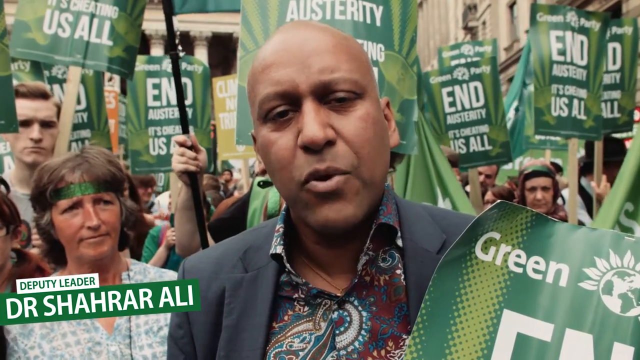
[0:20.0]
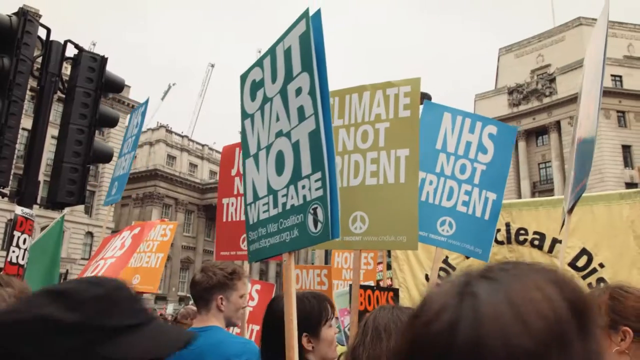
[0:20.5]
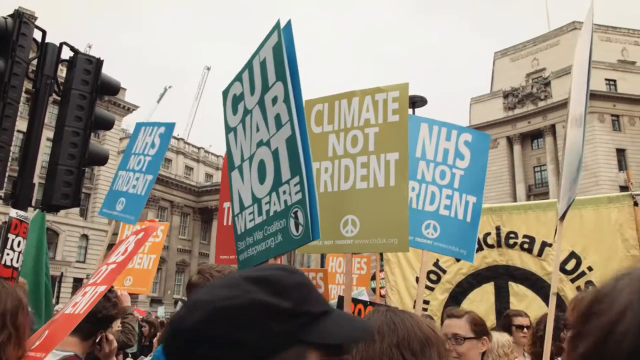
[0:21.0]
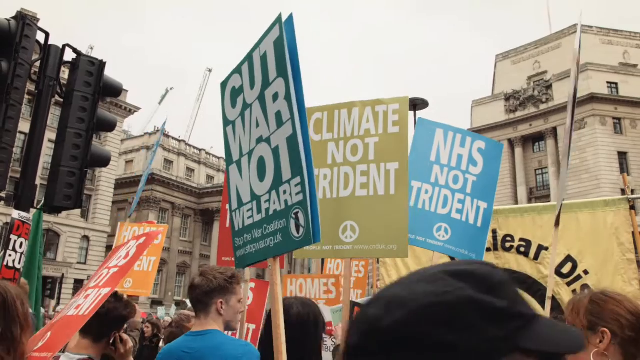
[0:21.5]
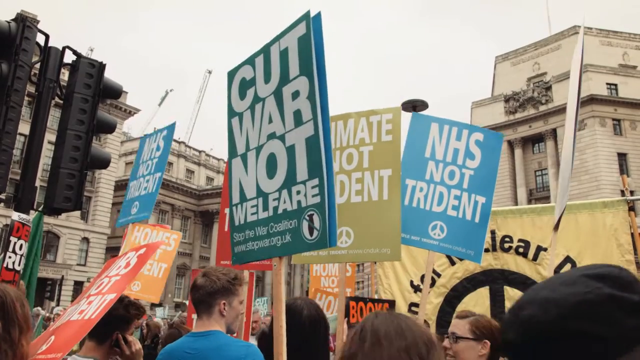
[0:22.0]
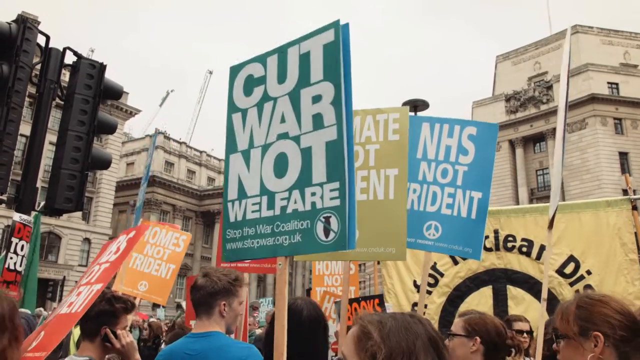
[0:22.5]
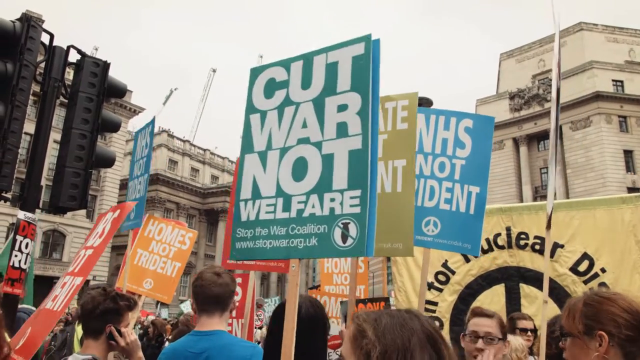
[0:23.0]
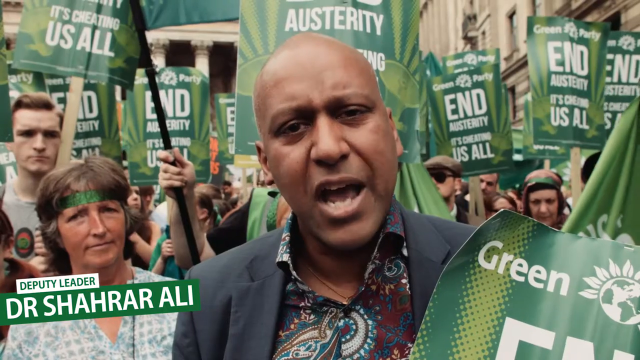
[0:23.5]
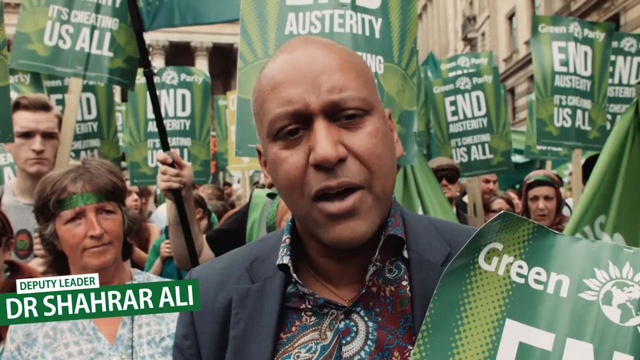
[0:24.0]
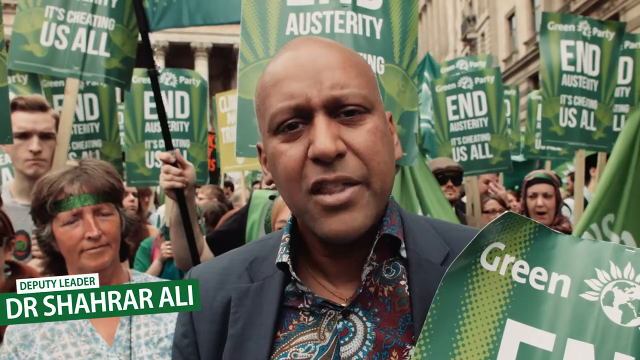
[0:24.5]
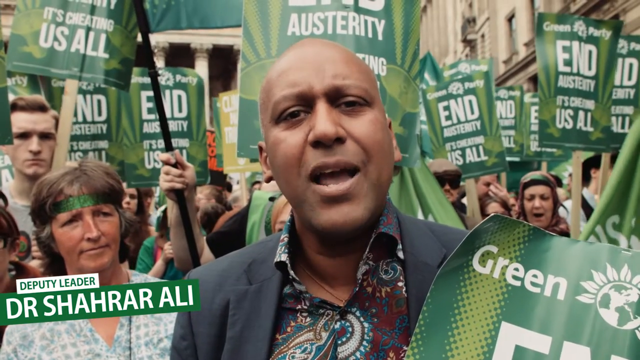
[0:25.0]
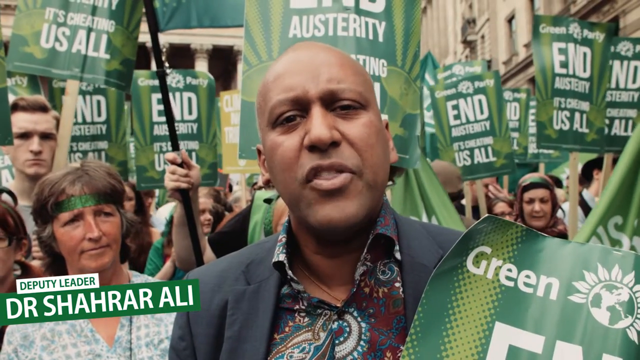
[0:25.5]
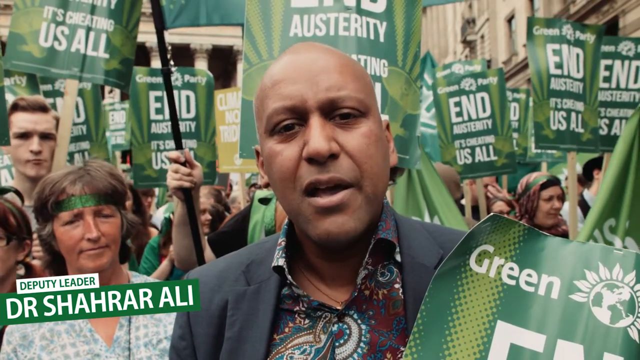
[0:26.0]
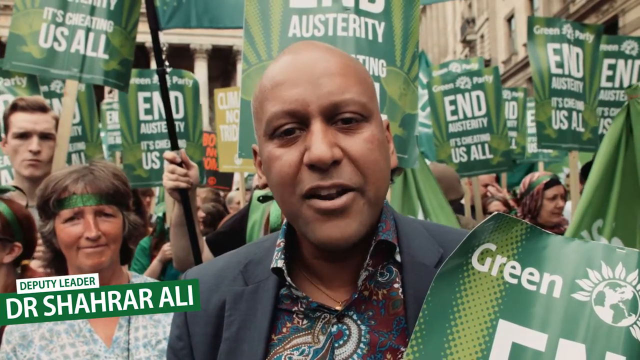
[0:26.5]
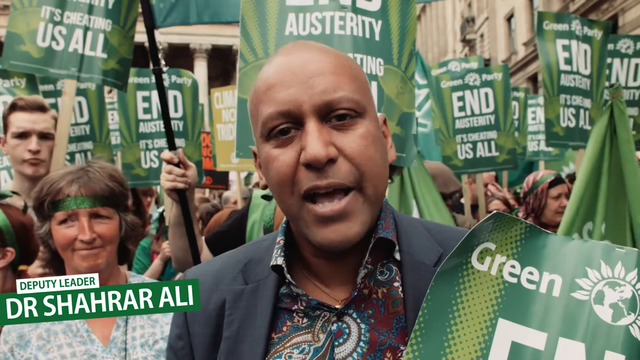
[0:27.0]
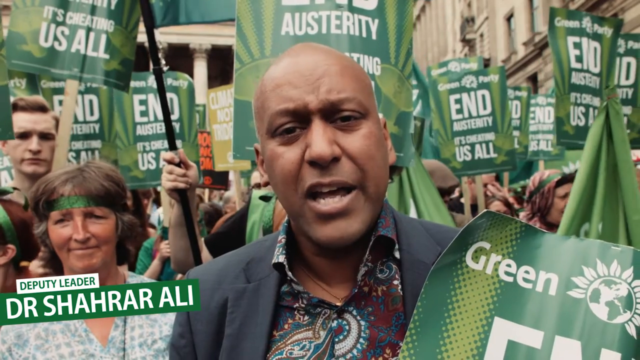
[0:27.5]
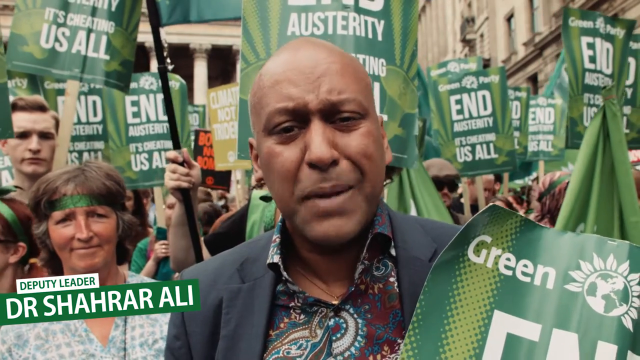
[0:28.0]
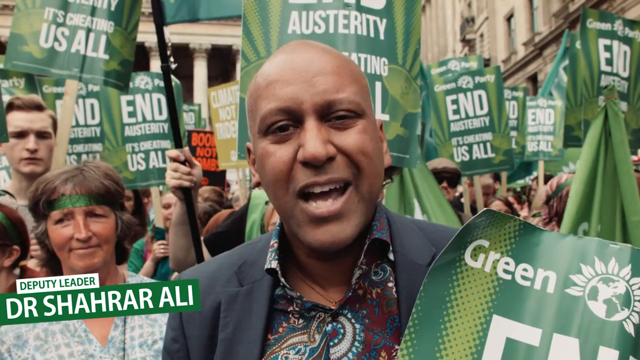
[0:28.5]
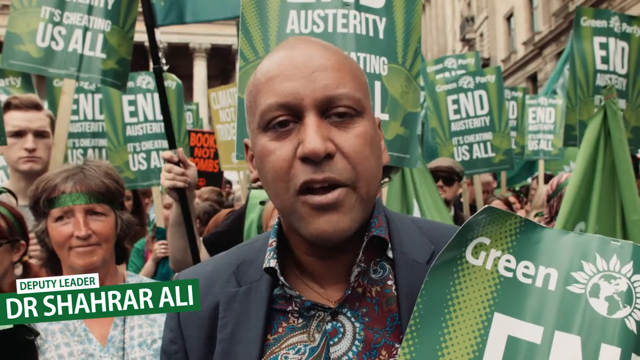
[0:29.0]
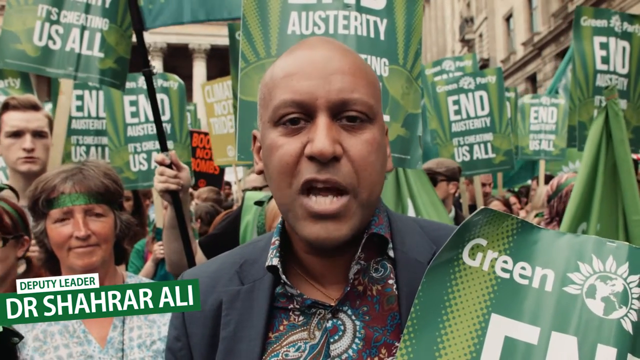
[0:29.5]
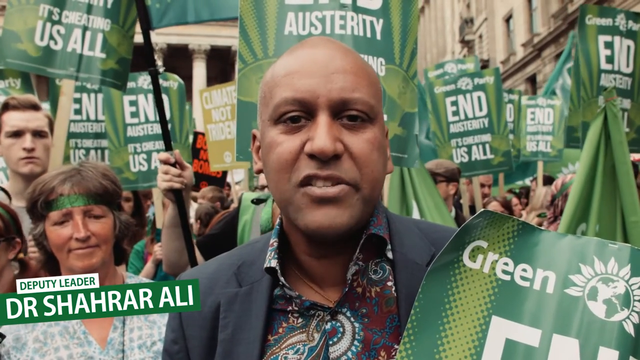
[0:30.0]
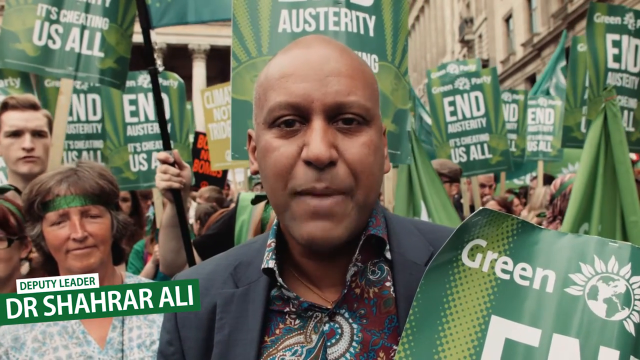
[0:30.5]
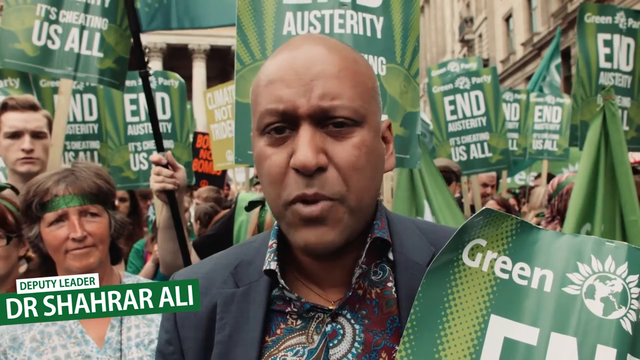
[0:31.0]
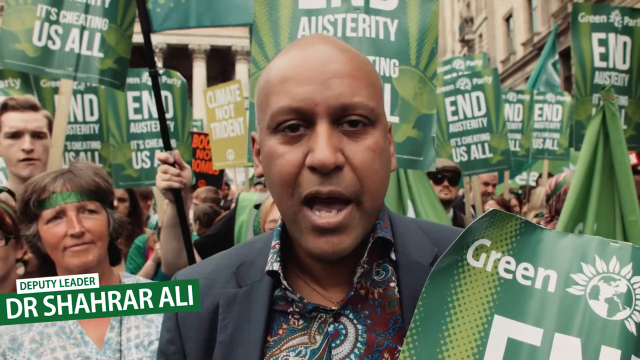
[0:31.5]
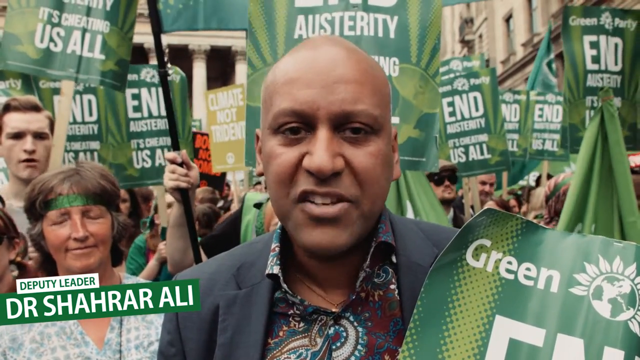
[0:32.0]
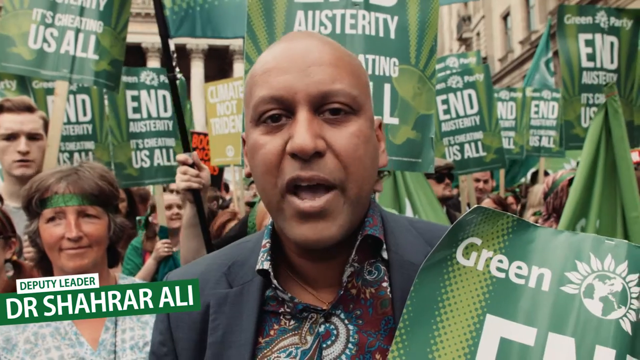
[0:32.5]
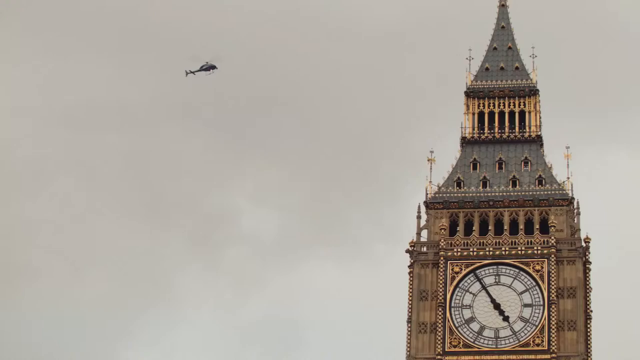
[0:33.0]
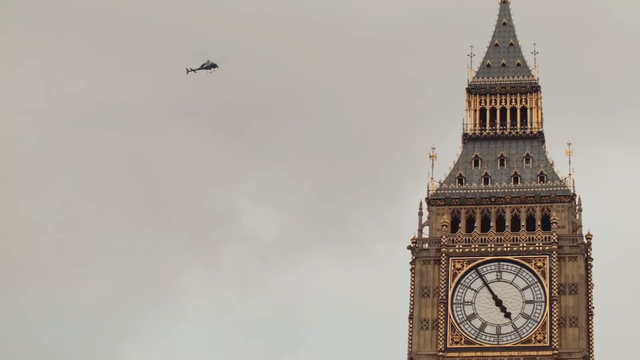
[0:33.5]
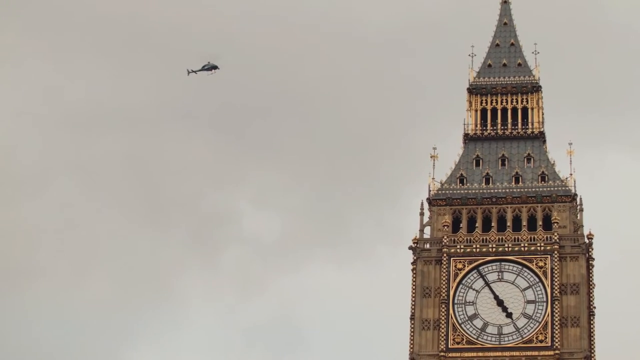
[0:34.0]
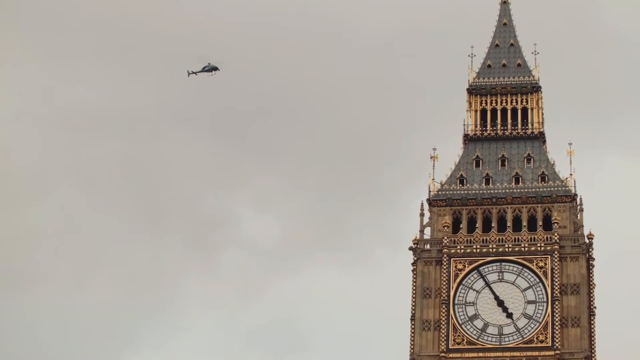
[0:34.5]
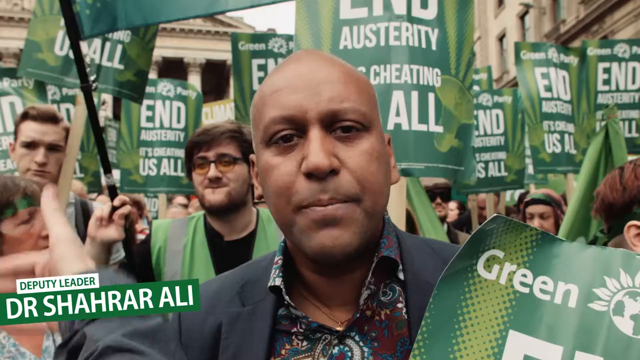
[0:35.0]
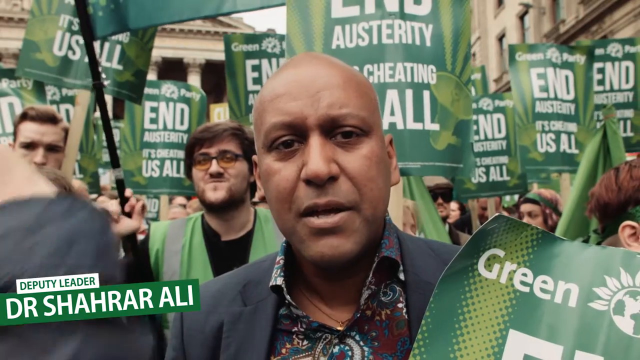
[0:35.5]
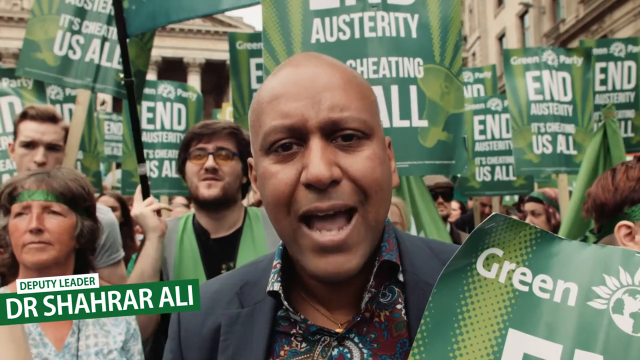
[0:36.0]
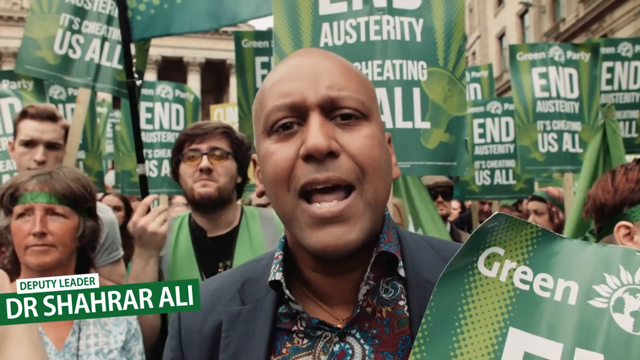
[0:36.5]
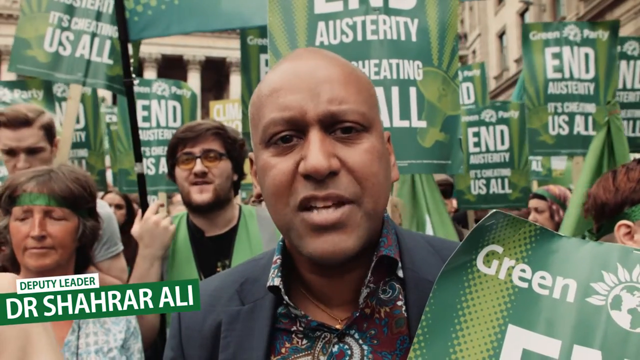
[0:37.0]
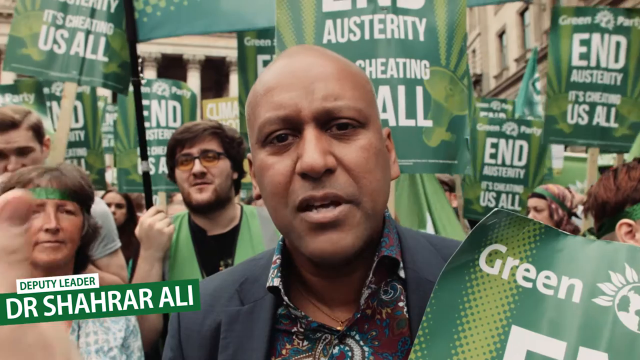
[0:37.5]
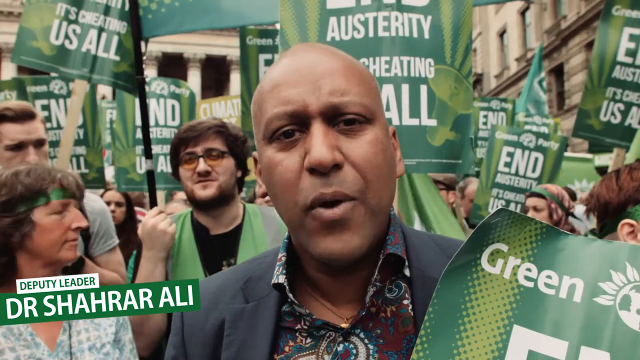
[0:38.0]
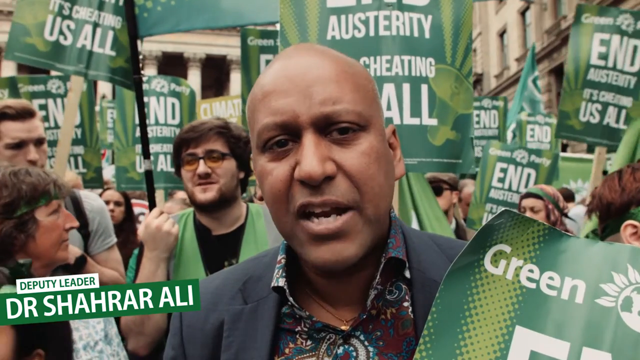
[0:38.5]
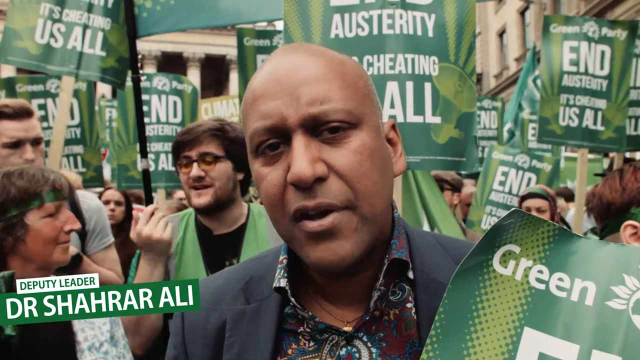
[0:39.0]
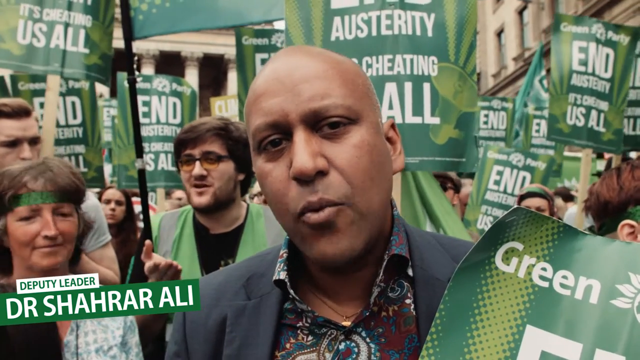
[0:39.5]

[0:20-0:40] The African-American man in the dark gray coat with a multicolored polo underneath speaks to the media; he is Dr. Shahraad Ali, apparently the deputy leader of the Green Party, and the cards around him call to end austerity because "it's cheating us all." The video pans quickly to another group of protesters holding differently worded cards, many with green, light green and light blue backgrounds, along with red and orange ones. One card reads in big white font "cut war not welfare, stop the war coalition" and carries a website address that is hard to read except that it ends in ".UK", suggesting the event is in the United Kingdom. Other cards read "climate not trident" and "NHS not trident," with a peace sign beneath those two cards. Another card says something about nuclear. The protesters are surrounded by government buildings, apparently in a downtown area of London.